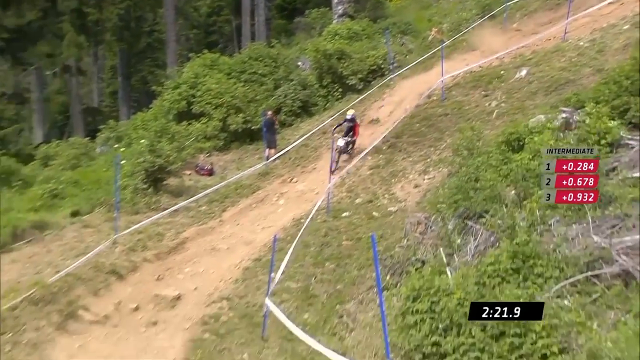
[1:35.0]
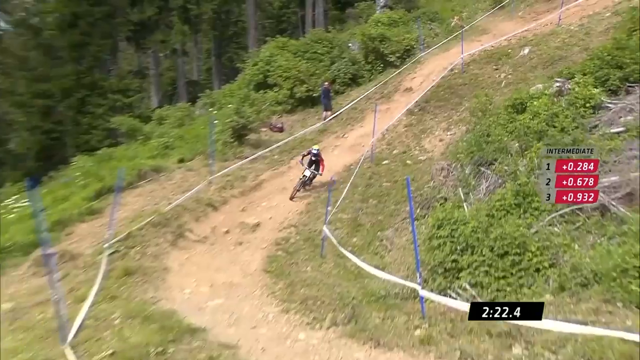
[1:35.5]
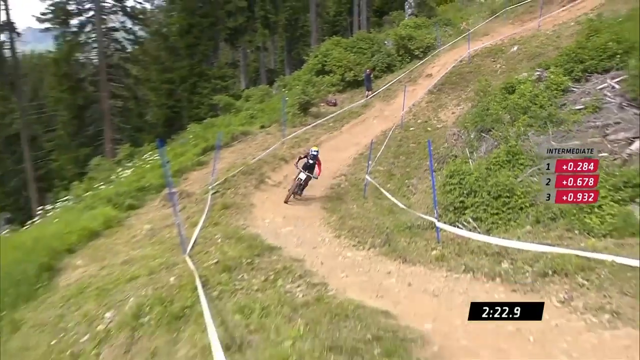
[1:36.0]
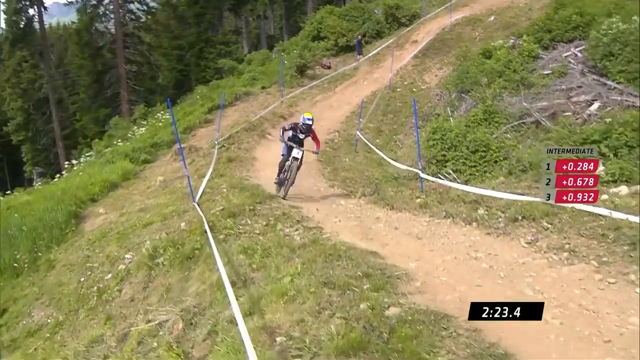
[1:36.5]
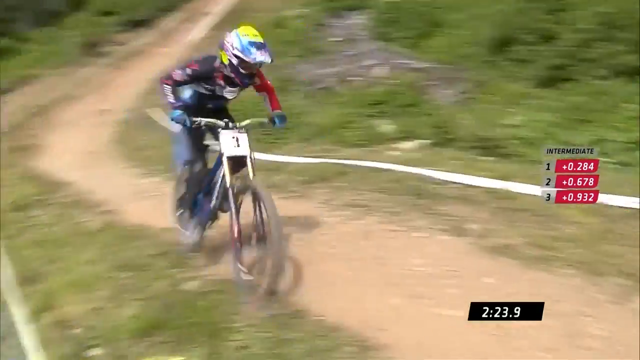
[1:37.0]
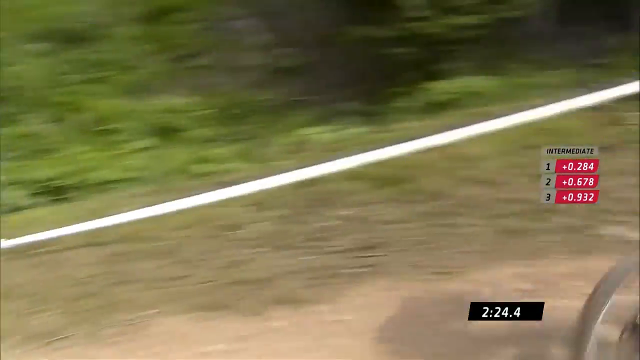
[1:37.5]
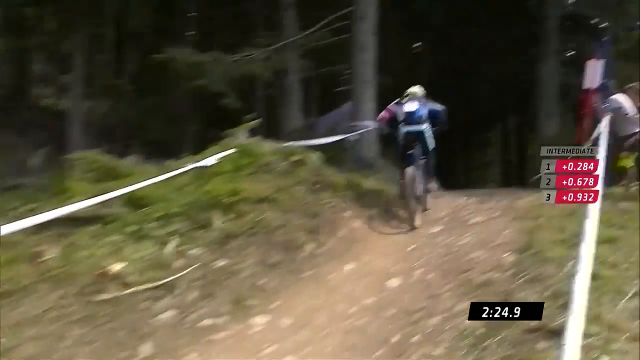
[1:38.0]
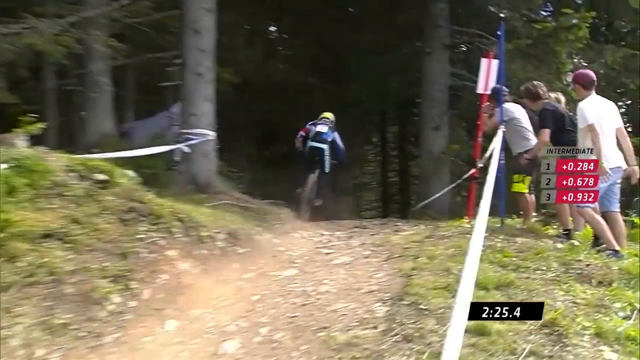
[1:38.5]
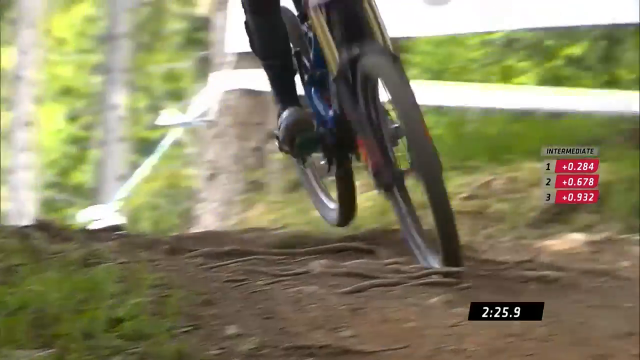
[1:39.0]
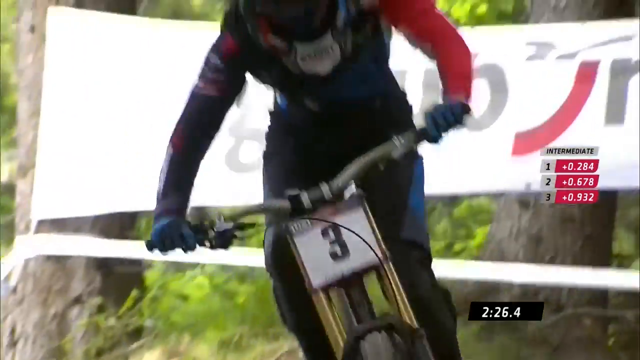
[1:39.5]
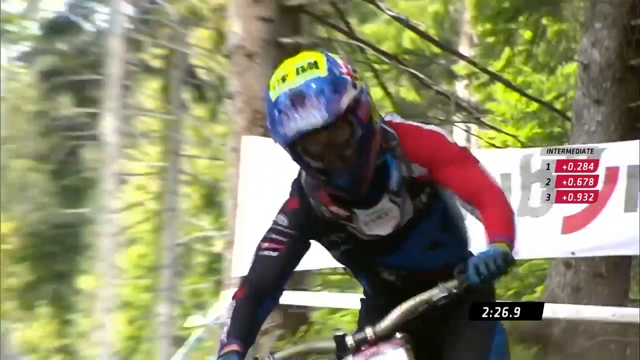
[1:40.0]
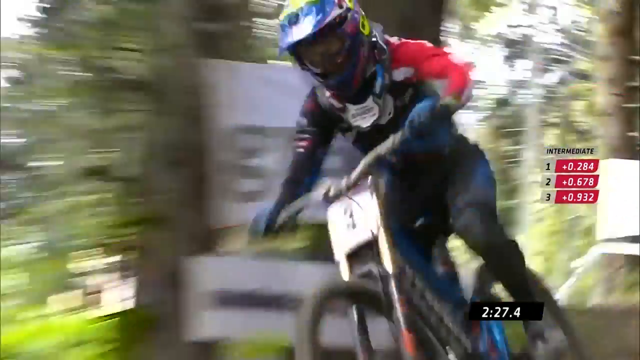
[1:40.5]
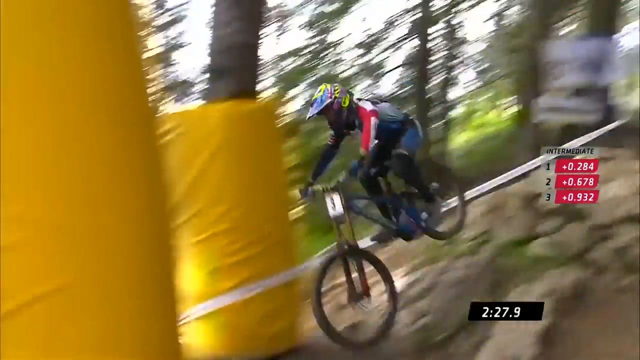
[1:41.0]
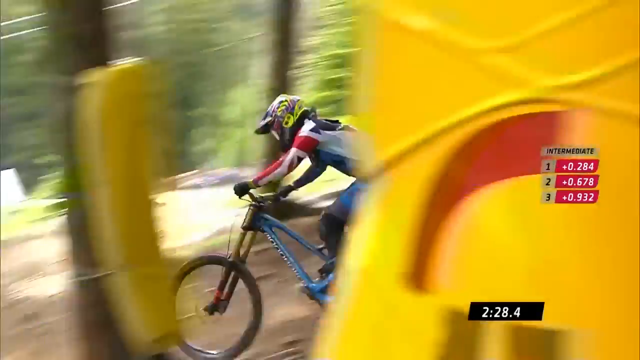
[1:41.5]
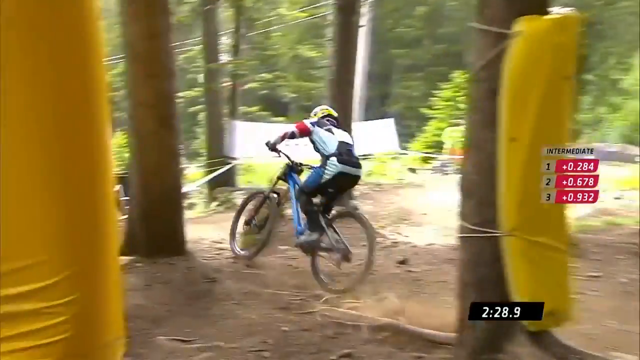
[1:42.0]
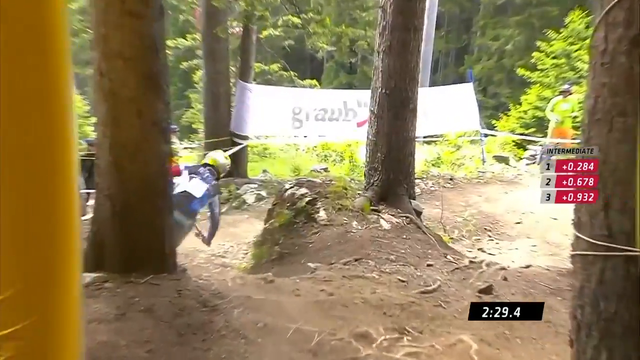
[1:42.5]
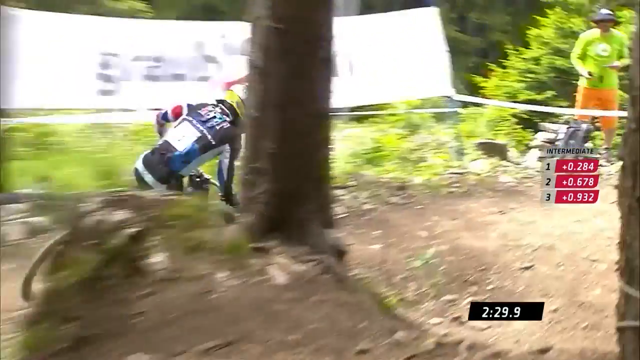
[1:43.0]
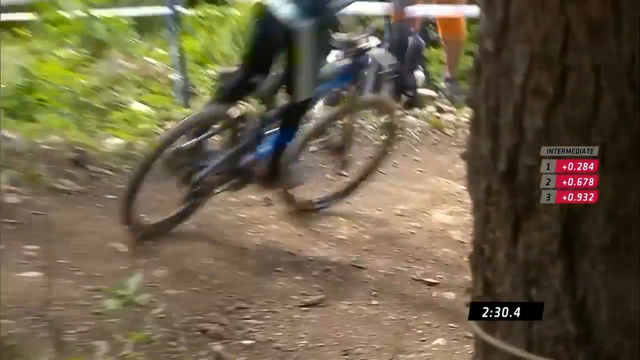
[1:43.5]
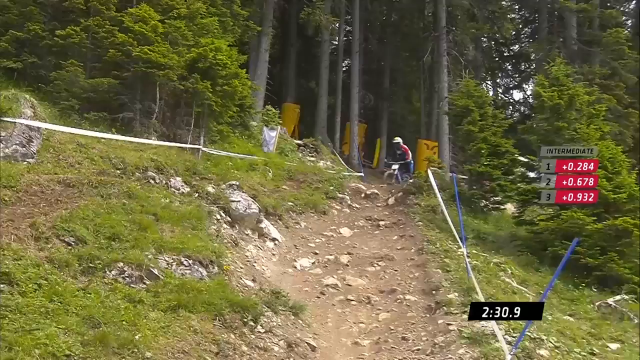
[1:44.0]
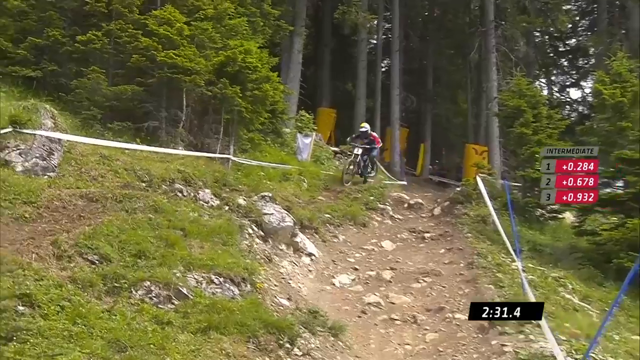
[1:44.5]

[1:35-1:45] The biker goes over a short bump and is back in the tree line. He passes three people who cheer him on as he enters a tight area with trees wrapped in yellow padding, and he races over some bumps and raised tree roots. He turns a tight, sharp corner and looks like he is about to go down another steep hill, slightly outside a wider width of the path.